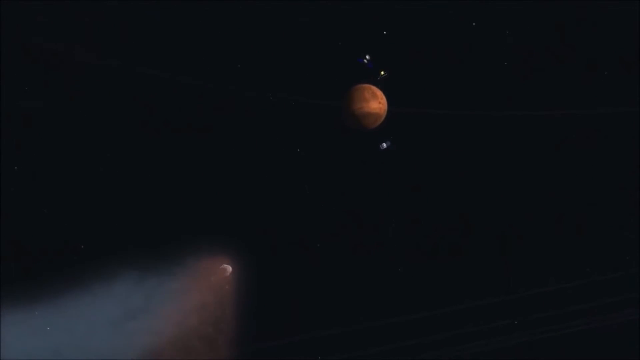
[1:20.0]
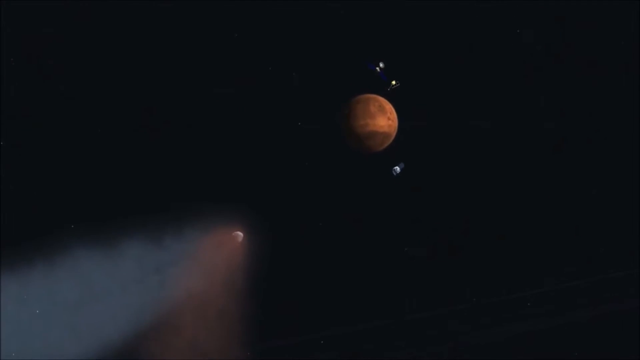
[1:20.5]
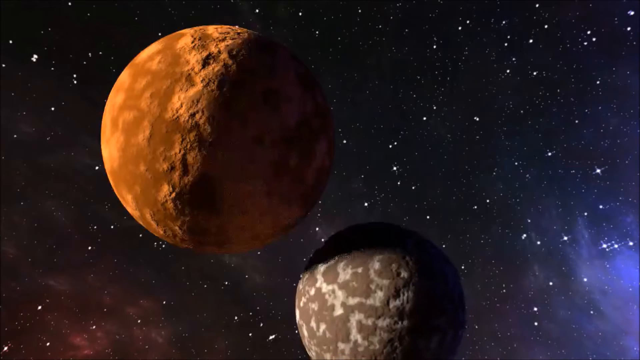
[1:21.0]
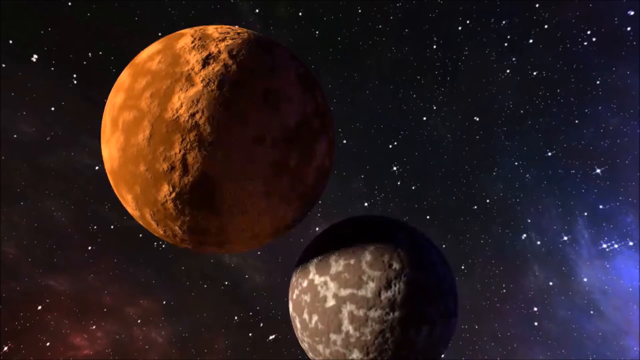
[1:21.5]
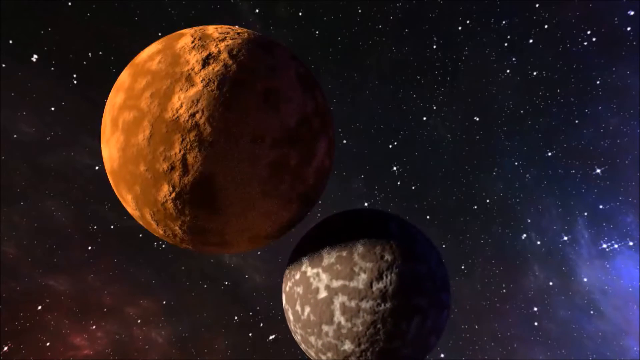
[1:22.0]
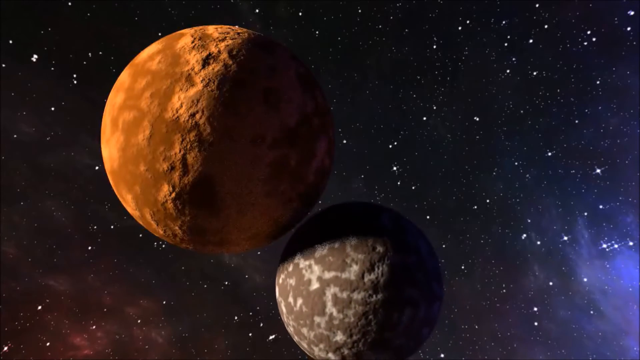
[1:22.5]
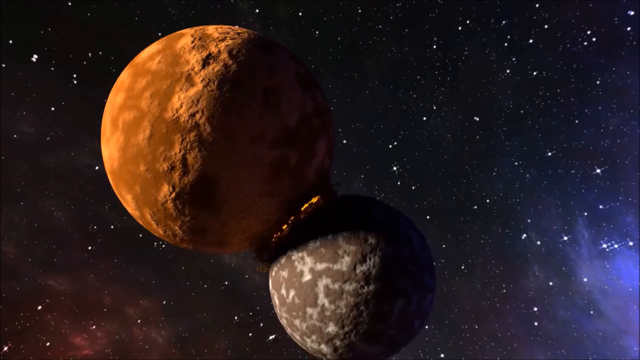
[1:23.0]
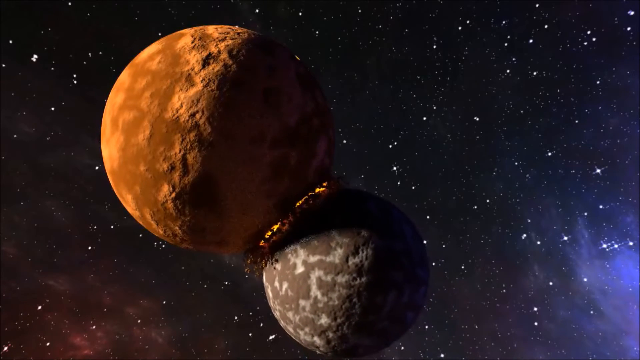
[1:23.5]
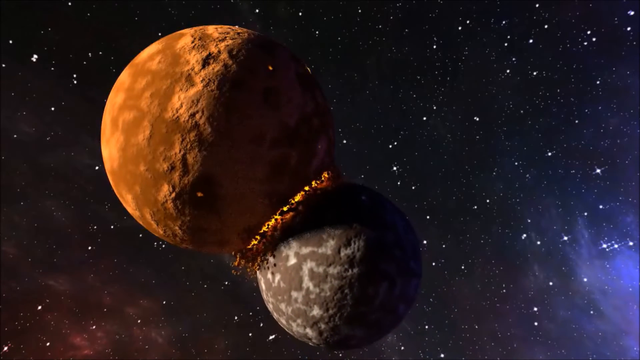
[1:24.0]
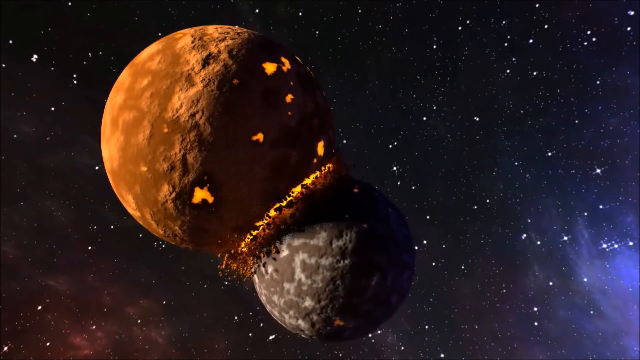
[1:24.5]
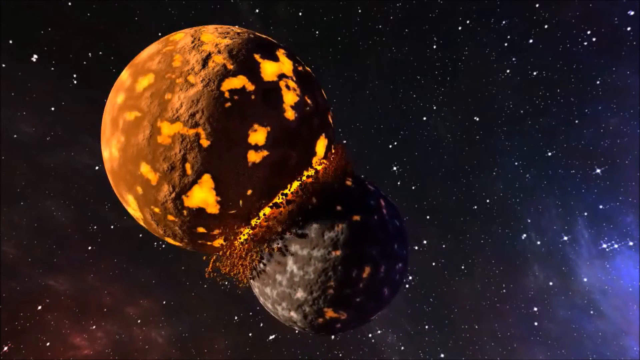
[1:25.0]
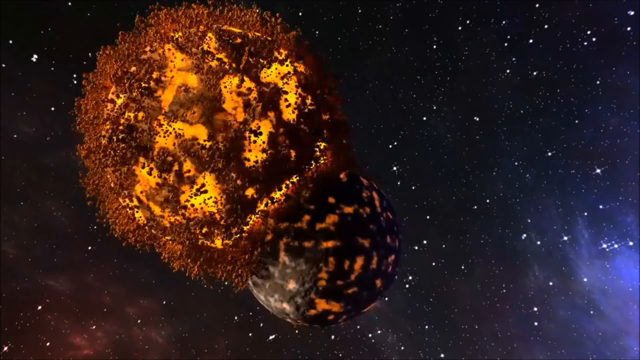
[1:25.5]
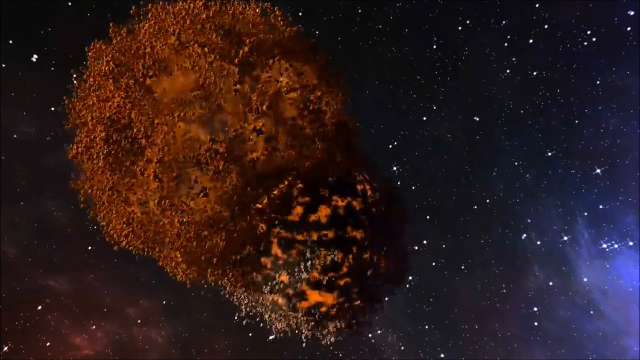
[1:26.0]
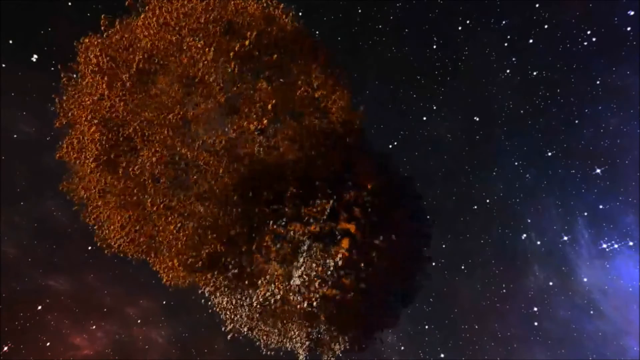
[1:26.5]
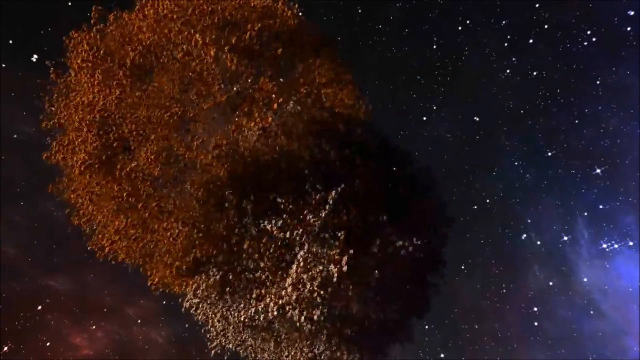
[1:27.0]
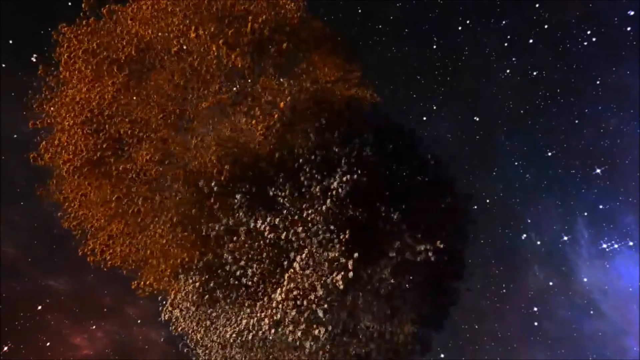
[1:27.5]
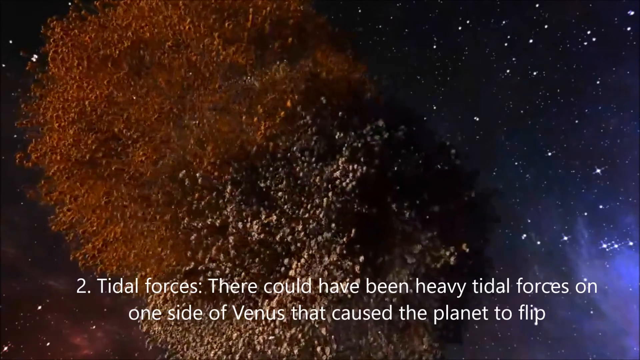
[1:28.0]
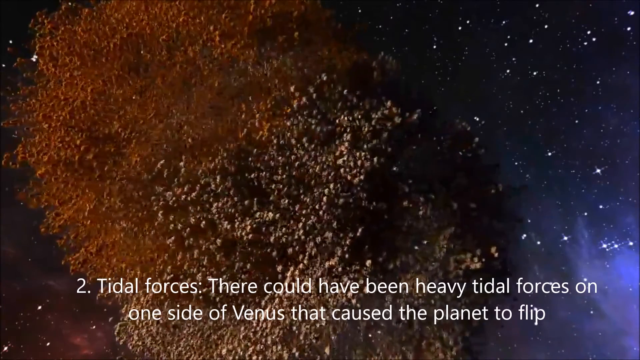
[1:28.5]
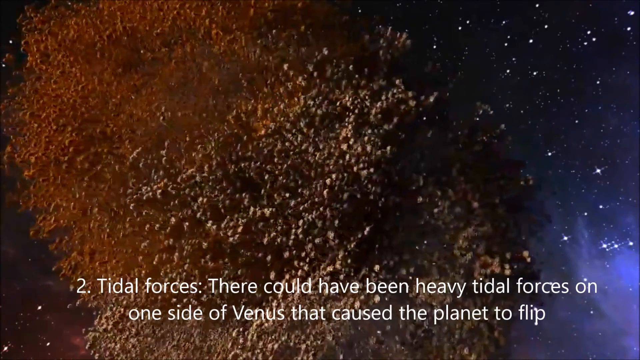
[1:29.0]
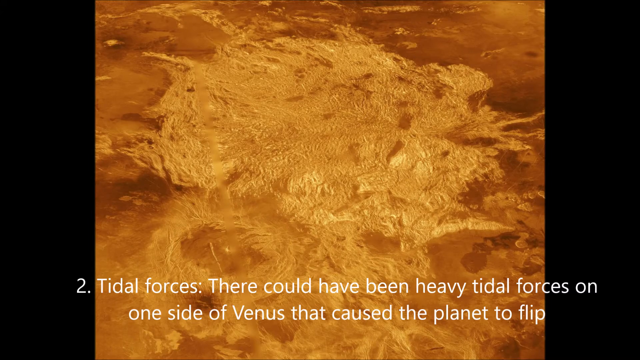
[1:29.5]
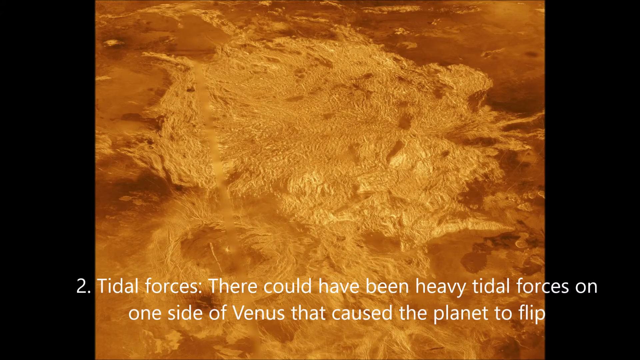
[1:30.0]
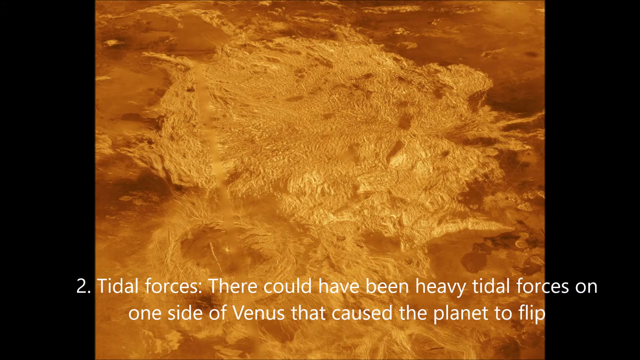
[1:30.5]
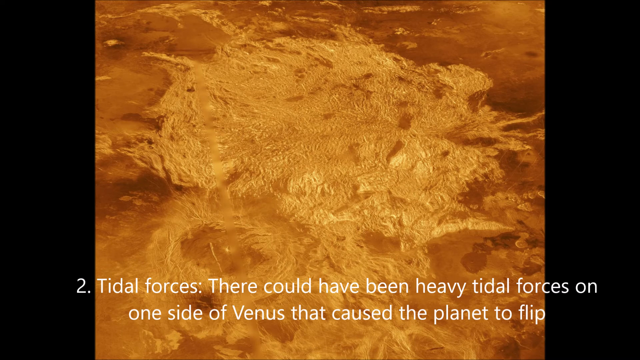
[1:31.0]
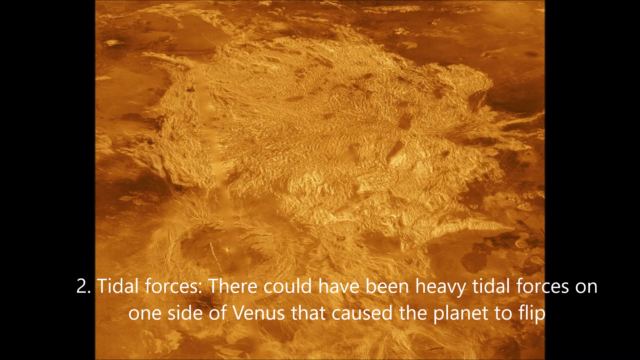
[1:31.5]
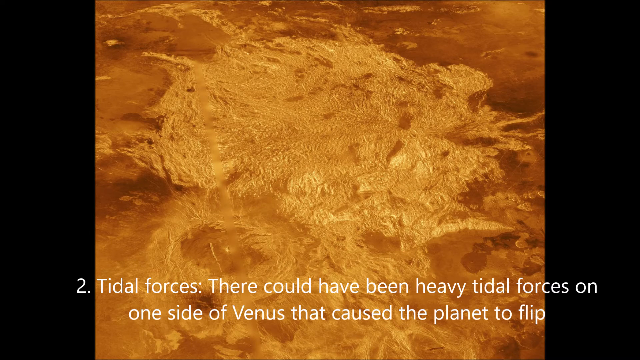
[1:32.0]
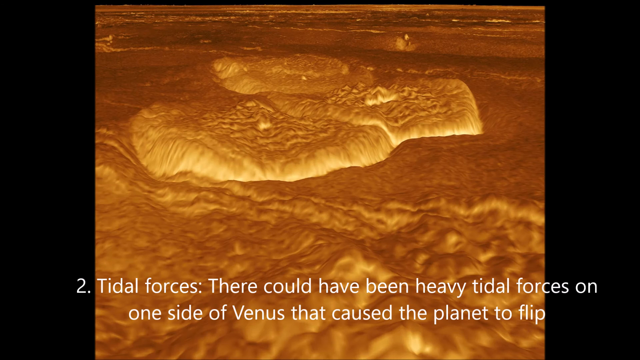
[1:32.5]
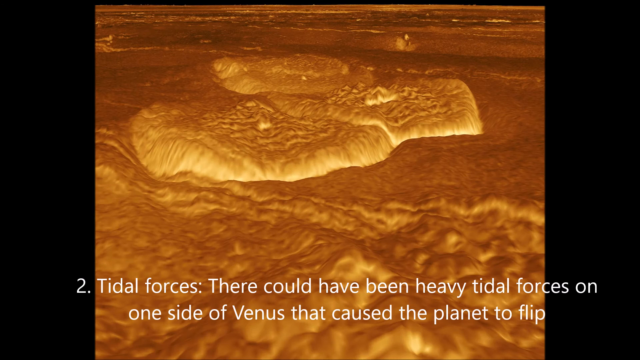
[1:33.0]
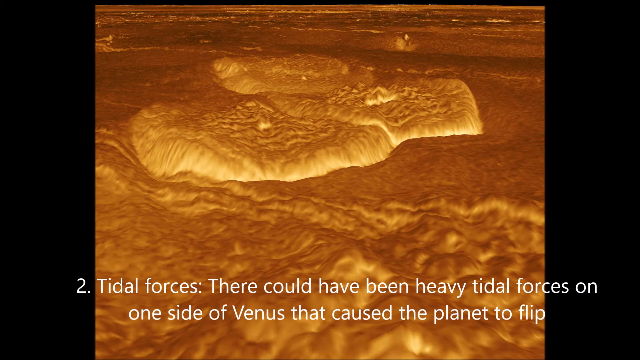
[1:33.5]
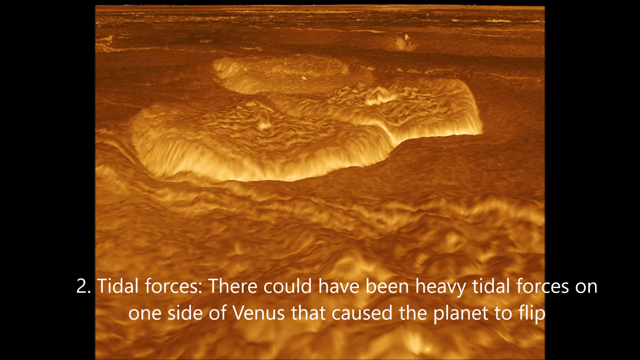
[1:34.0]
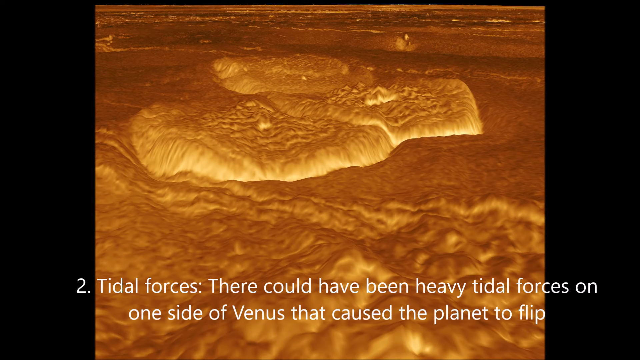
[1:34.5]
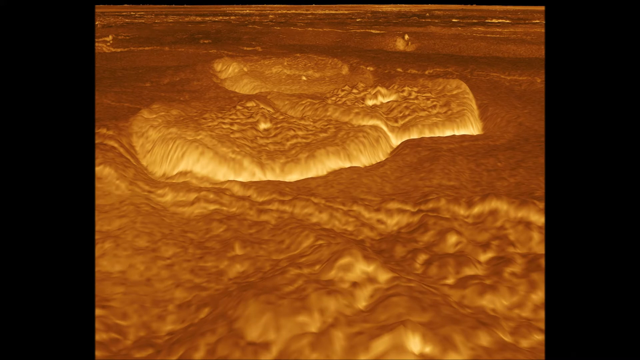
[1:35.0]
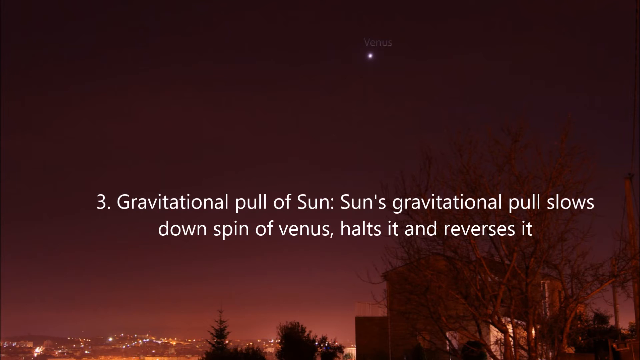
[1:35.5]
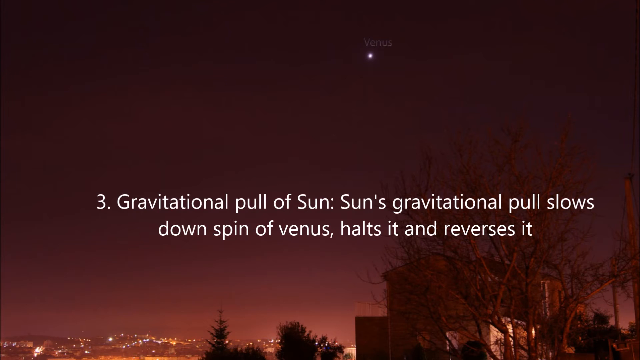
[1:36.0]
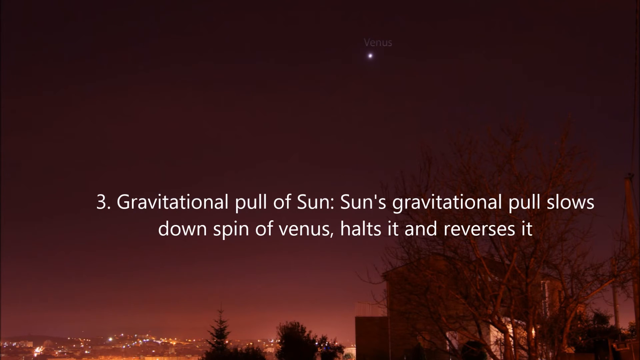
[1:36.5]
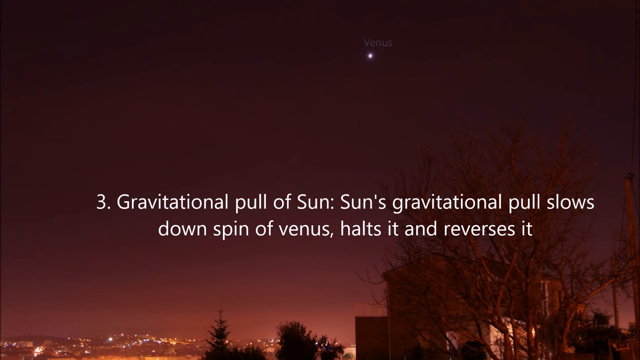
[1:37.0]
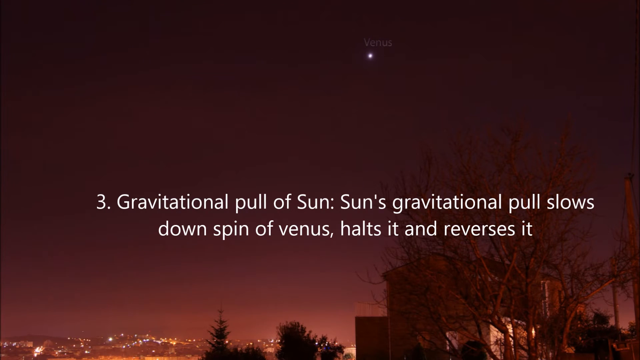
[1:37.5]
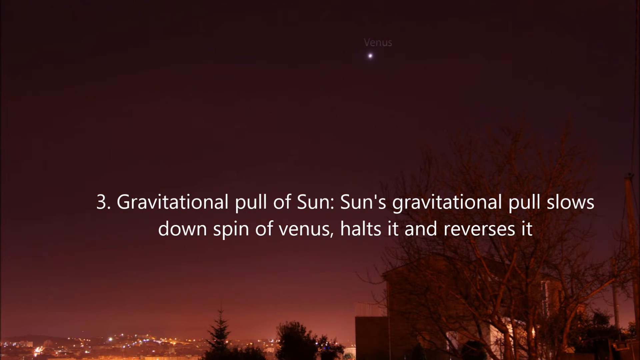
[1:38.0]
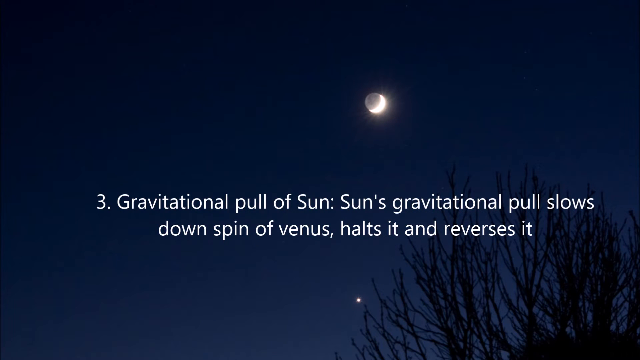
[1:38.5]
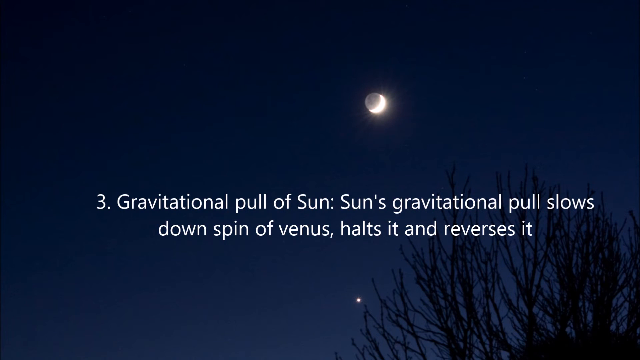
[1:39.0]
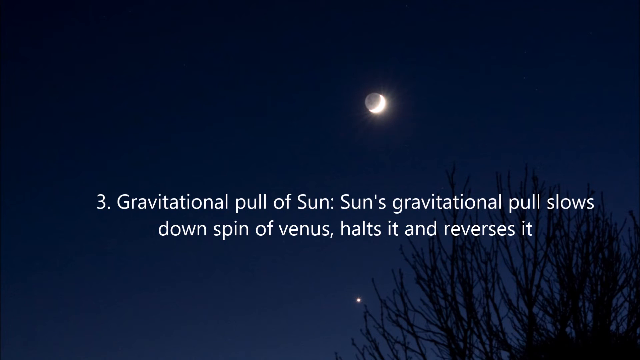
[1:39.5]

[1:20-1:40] The asteroid gets close to Venus. Then a still image shows a round planet approaching the same orange planet, and they collide in a very big collision in which both planets are destroyed and surrounded by the particles they were made of. At the bottom center of the screen the text reads "Two tidal forces there could have been heavy tidal forces on one side of Venus that caused the planet to flip". Next comes an image of what looks to be the outside view of Venus, followed by a screen that reads "Three gravitational pull of sun, sun's gravitational pull slows down spin of Venus halts it and reverses it". The entire video is computer generated and rectangular in shape, and no humans or animals are present.